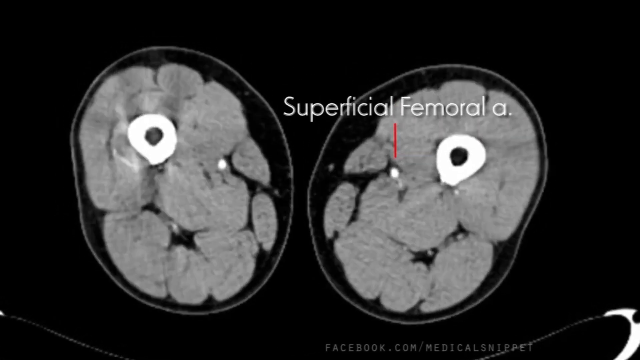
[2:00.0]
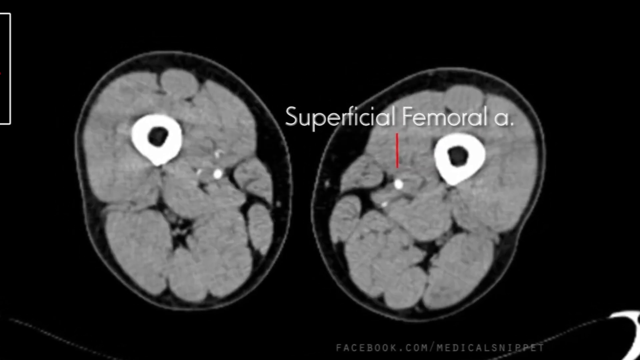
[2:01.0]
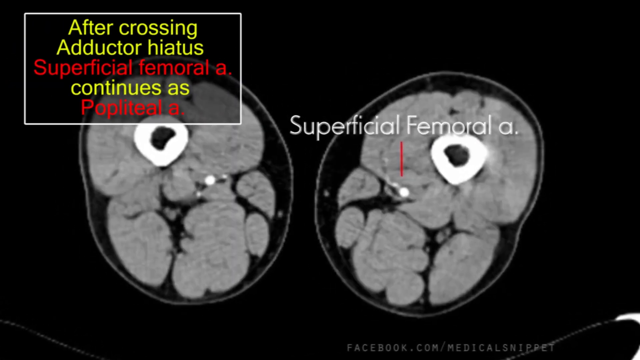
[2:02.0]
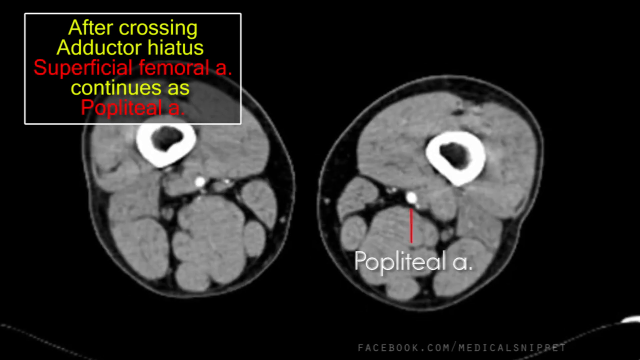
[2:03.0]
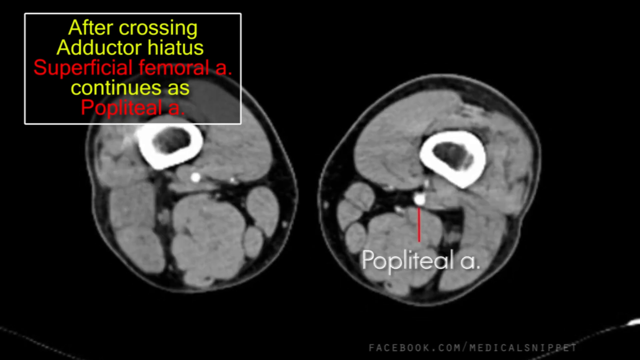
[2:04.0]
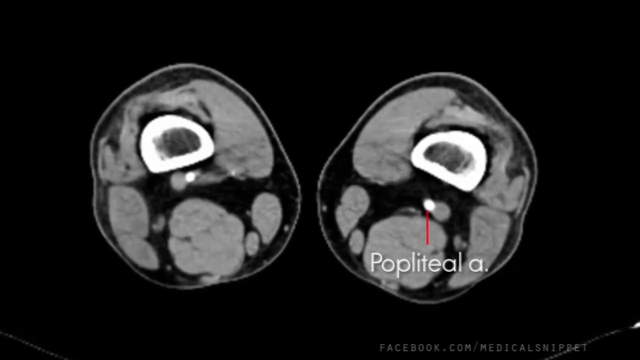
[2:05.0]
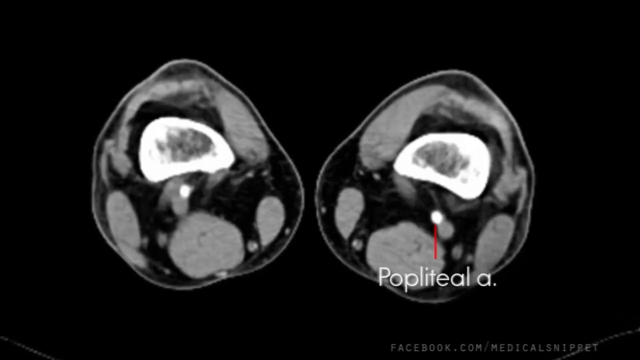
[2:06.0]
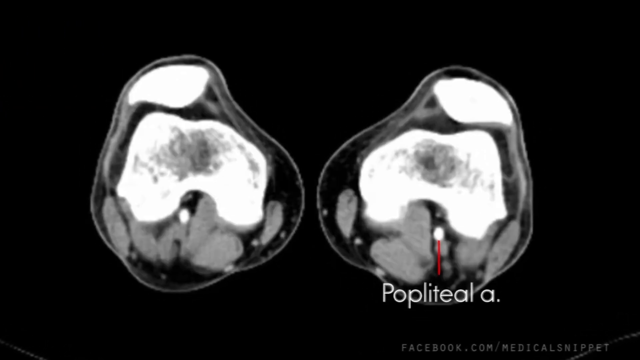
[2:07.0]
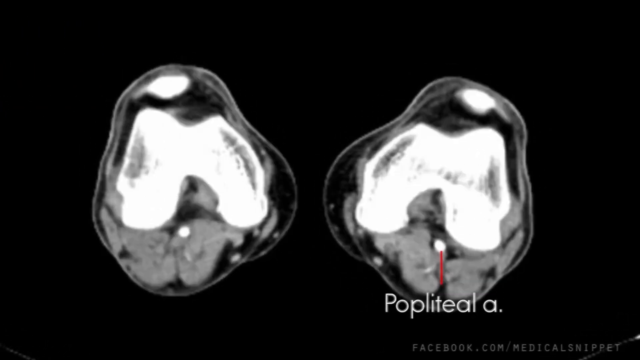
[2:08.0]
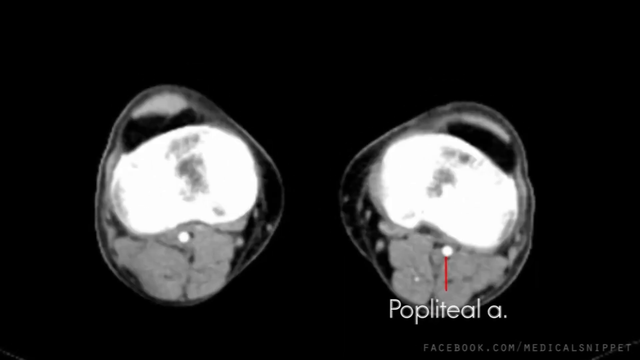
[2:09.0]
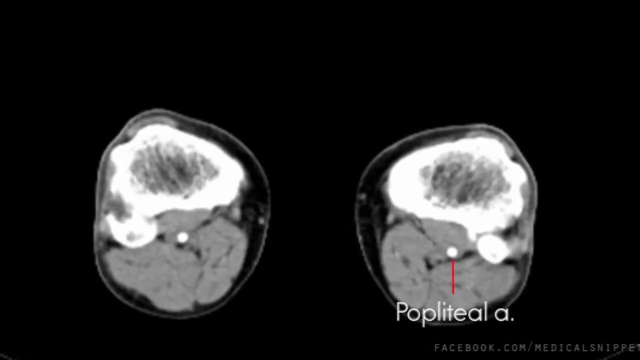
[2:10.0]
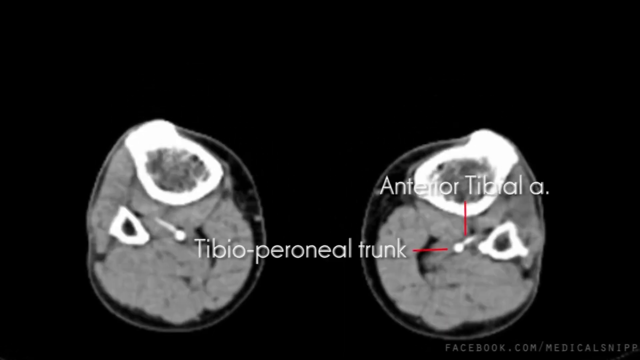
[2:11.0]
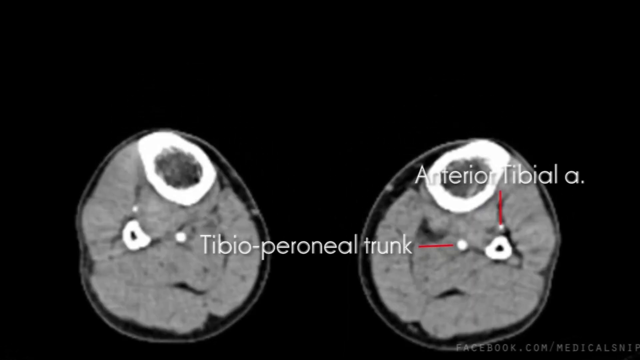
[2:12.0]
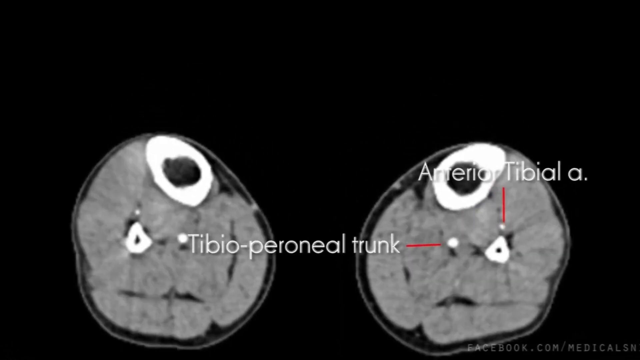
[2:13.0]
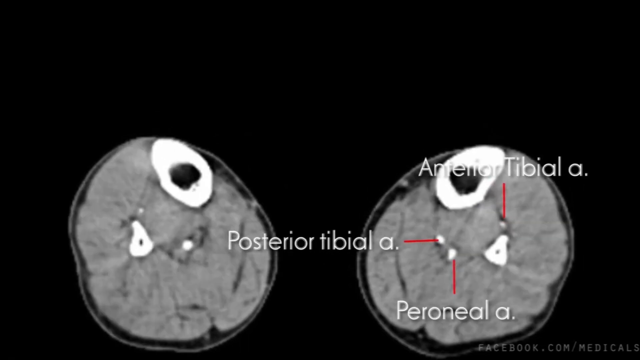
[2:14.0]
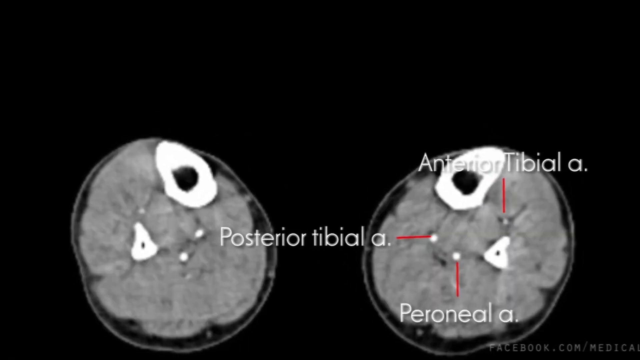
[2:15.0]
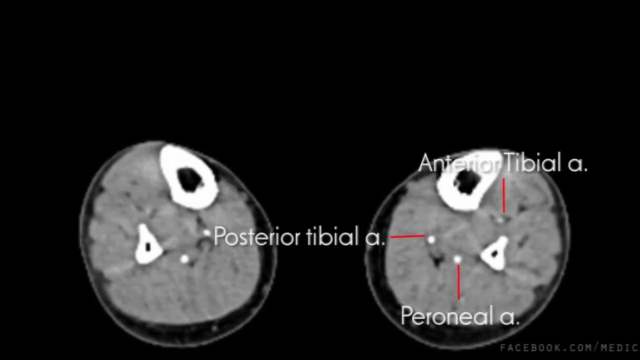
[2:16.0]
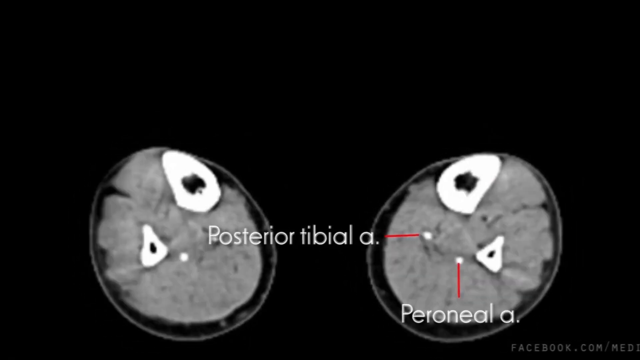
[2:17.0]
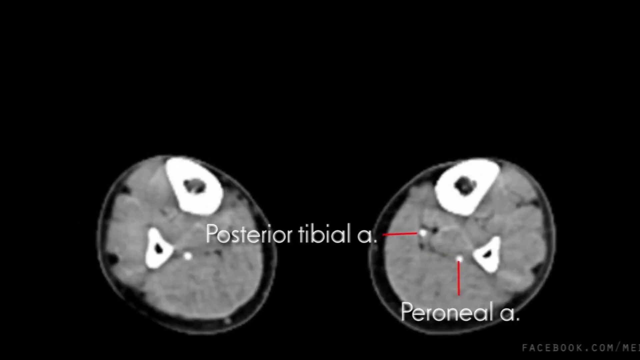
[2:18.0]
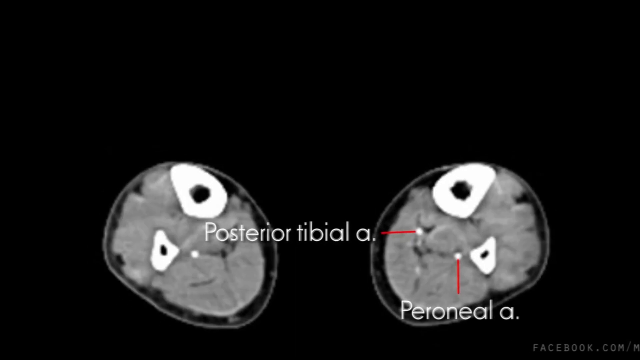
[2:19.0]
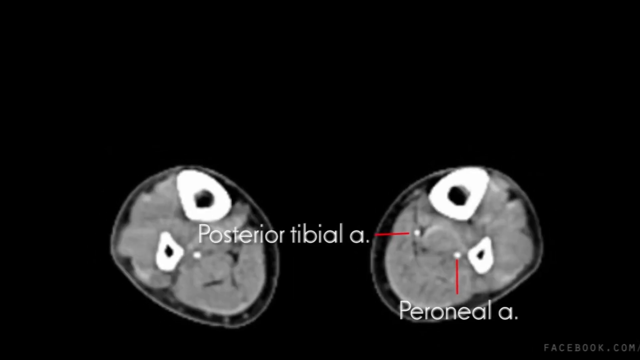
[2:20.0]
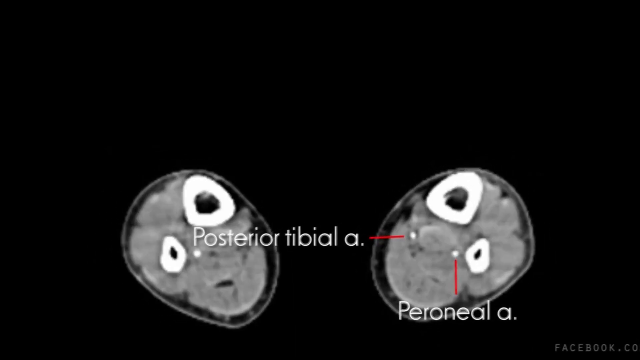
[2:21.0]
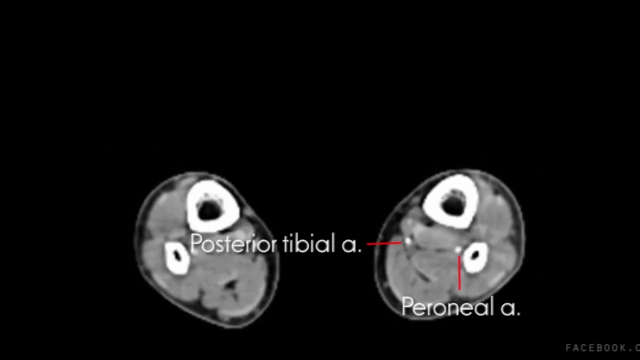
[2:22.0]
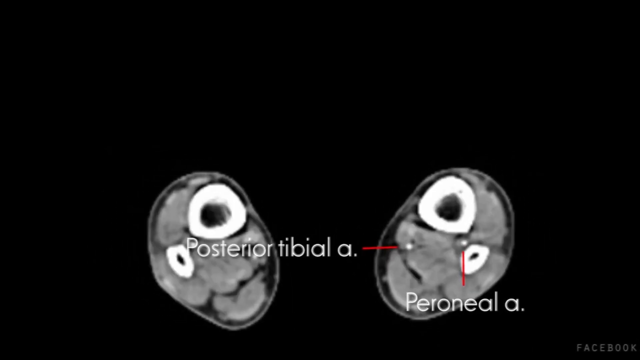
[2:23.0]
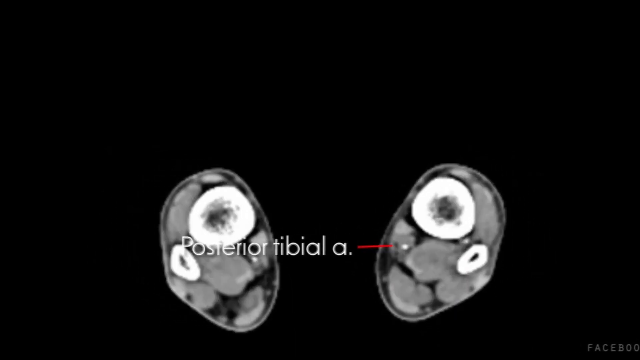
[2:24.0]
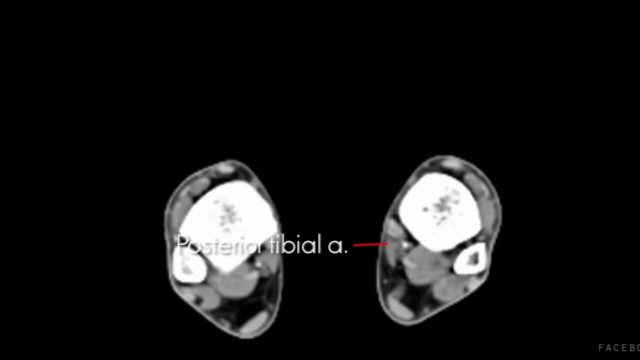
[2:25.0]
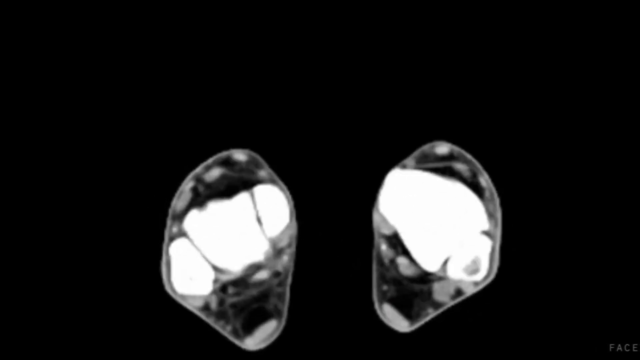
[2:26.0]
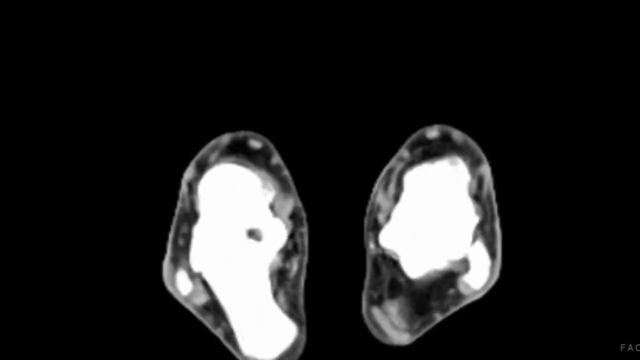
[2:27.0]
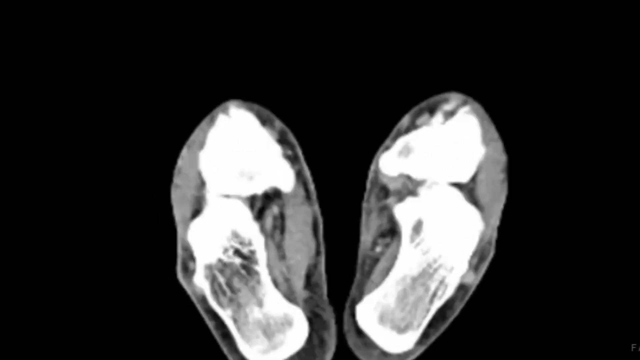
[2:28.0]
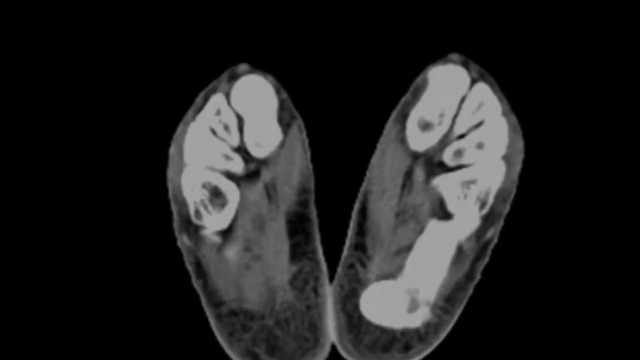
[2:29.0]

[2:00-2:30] On a black screen, two large circular or oval shapes are in the center, looking almost like mirror images of each other. They are black and white and appear to be medical imaging of some kind. The first words shown say "superficial femoral A" in white font, with a thin red line pointing to a particular spot on the image. After several seconds, a box appears in the upper left-hand corner of the screen with text in alternating yellow and red font: "After crossing adductor hiatus, superficial femoral A continues as popliteal A." The images keep shifting shape and transforming, and different medical terms flash on the screen with red lines pointing to their spots on the image. Toward the end, the images appear to decrease in size before transforming into something different altogether.